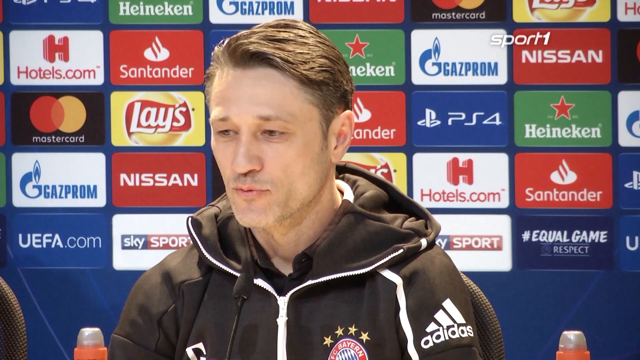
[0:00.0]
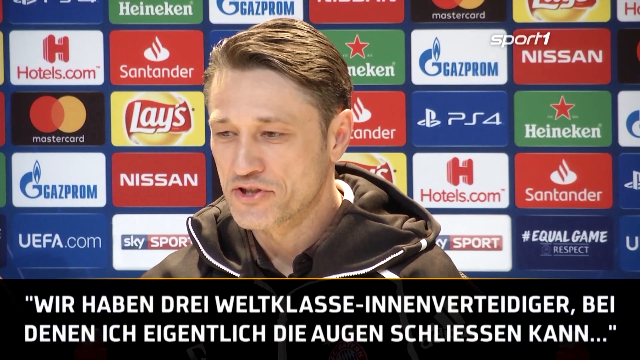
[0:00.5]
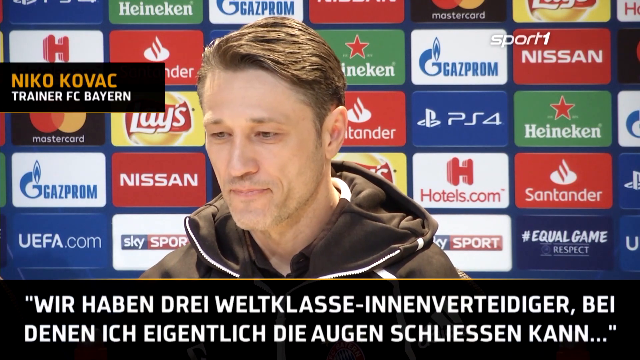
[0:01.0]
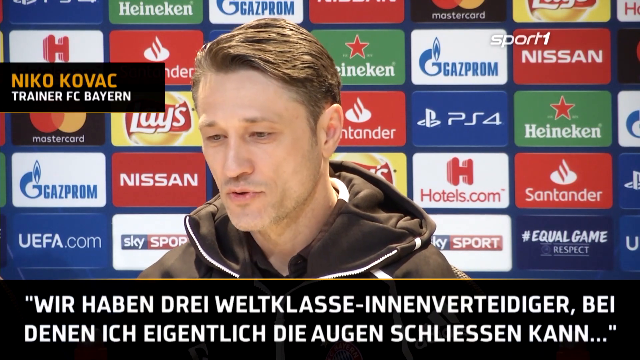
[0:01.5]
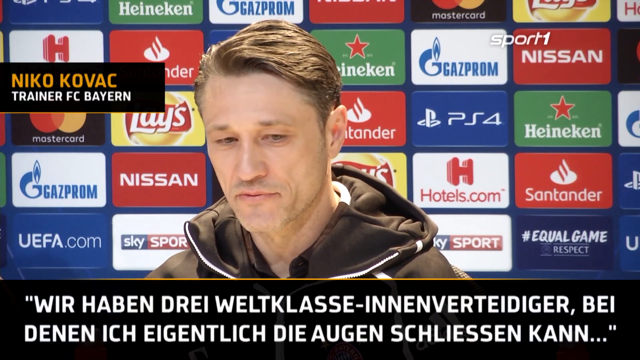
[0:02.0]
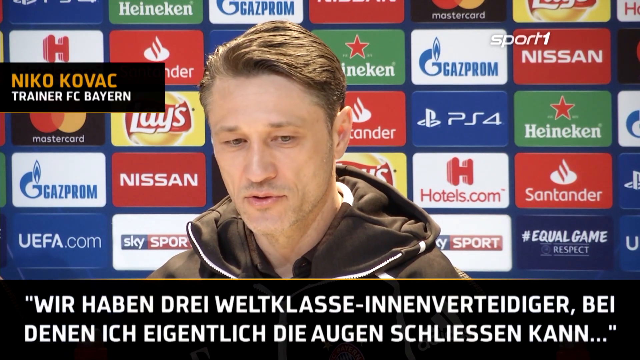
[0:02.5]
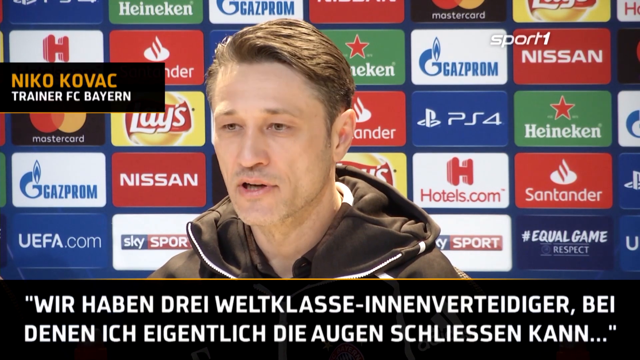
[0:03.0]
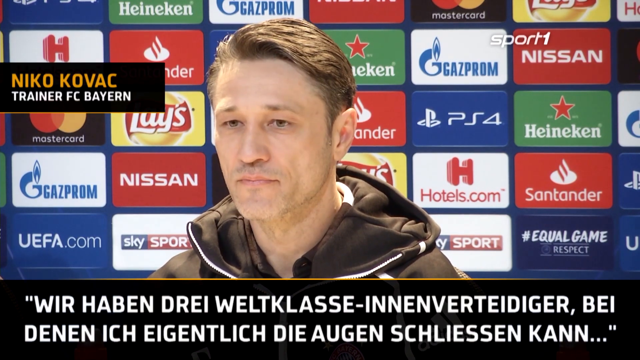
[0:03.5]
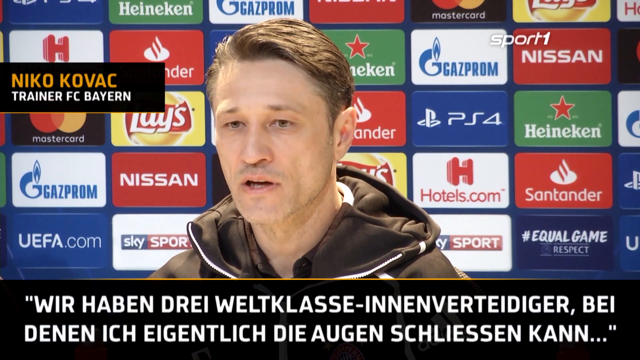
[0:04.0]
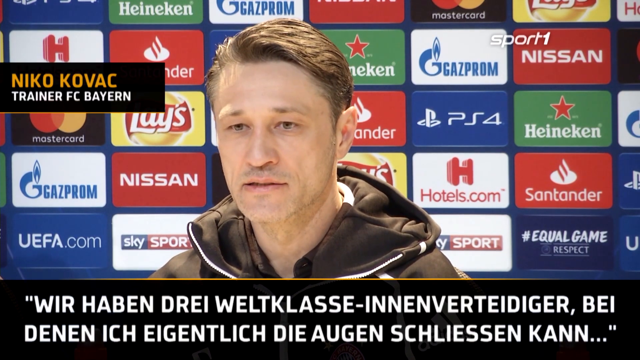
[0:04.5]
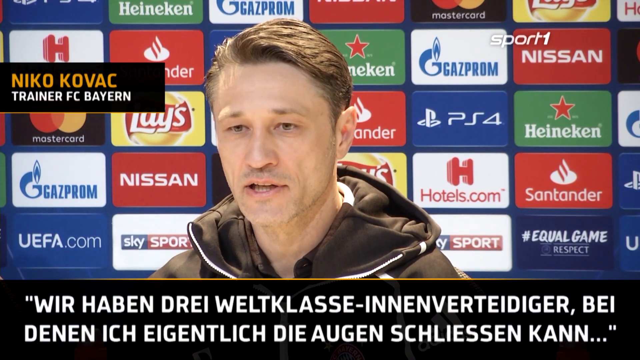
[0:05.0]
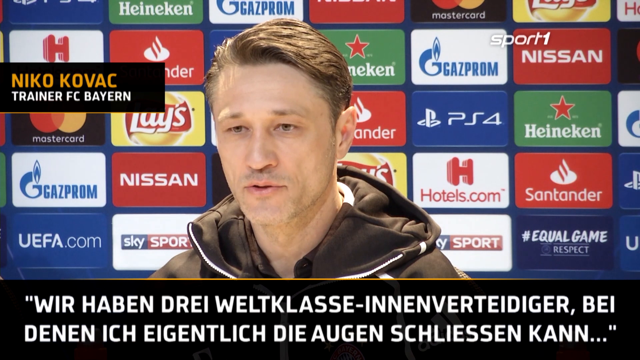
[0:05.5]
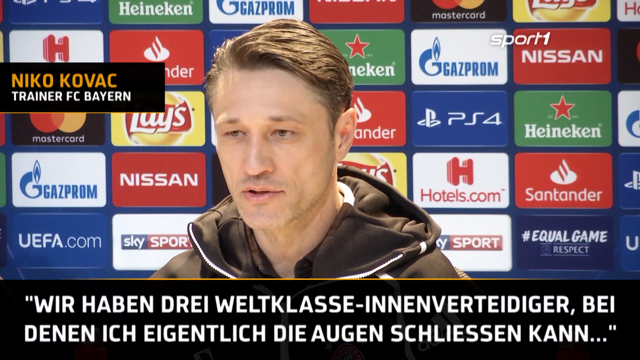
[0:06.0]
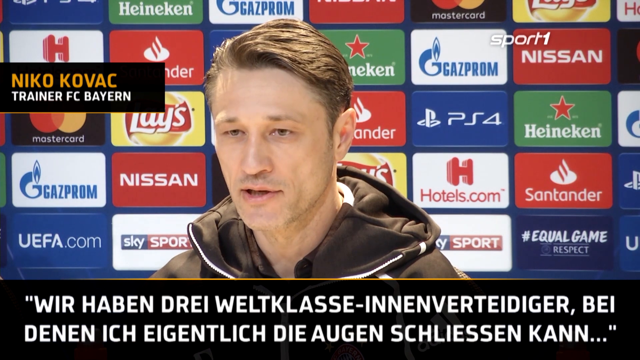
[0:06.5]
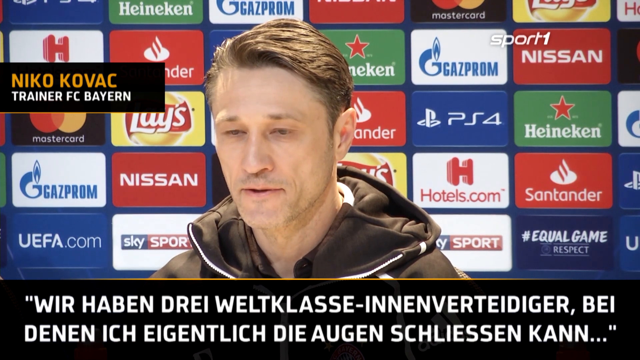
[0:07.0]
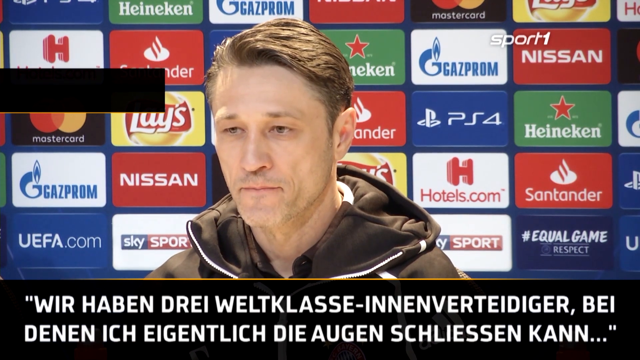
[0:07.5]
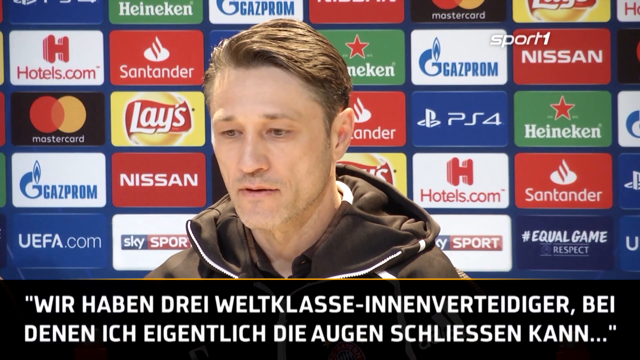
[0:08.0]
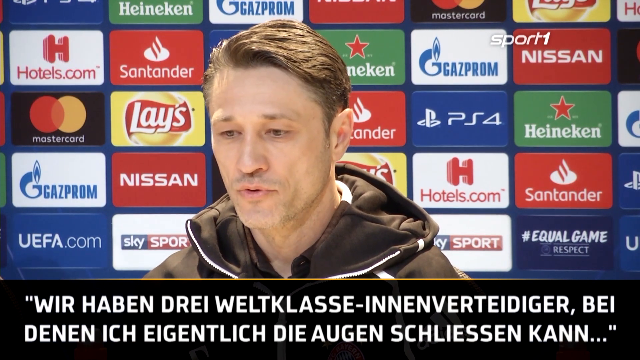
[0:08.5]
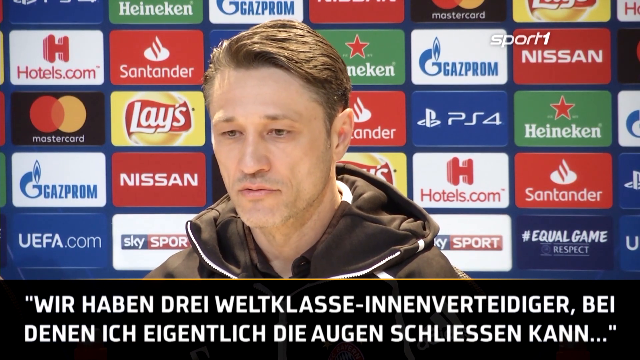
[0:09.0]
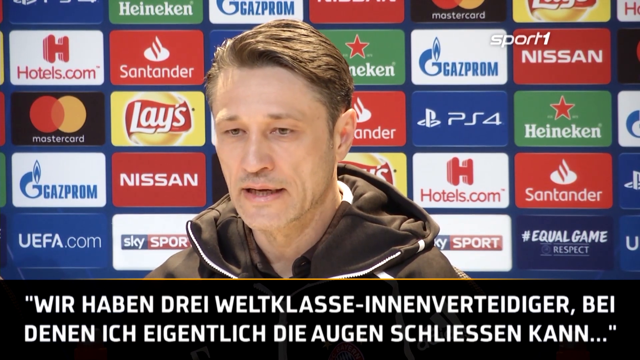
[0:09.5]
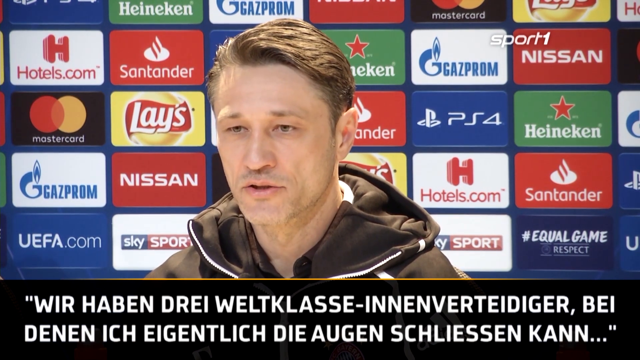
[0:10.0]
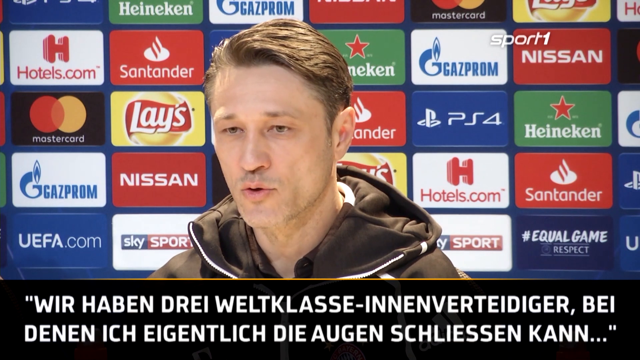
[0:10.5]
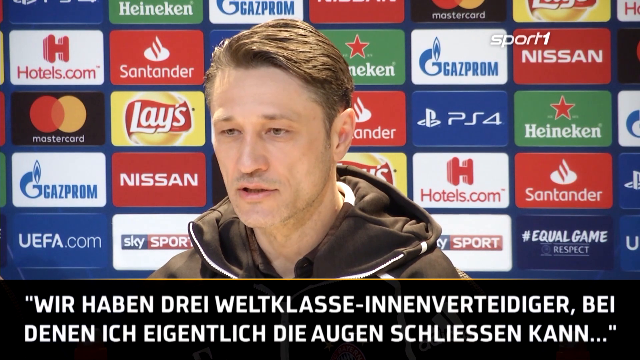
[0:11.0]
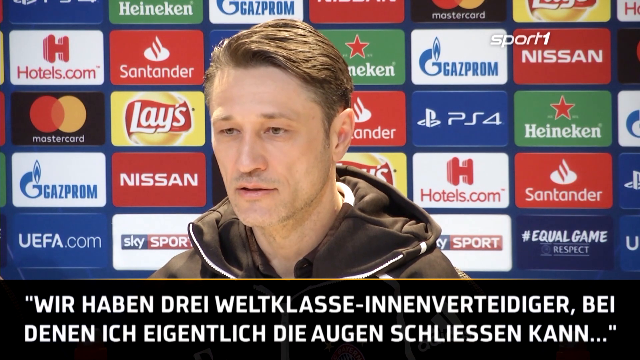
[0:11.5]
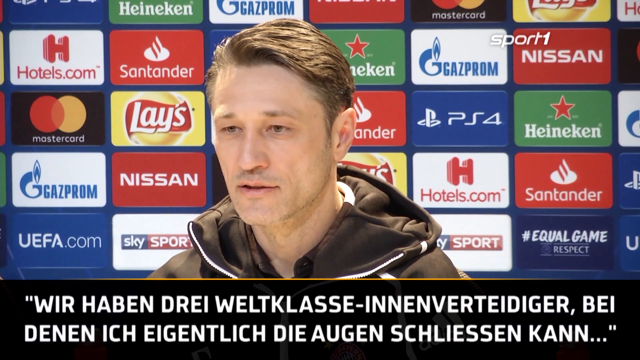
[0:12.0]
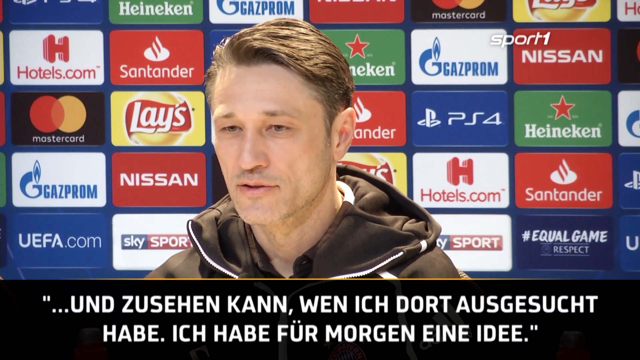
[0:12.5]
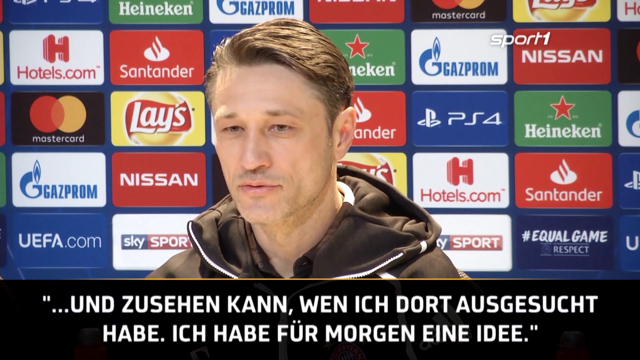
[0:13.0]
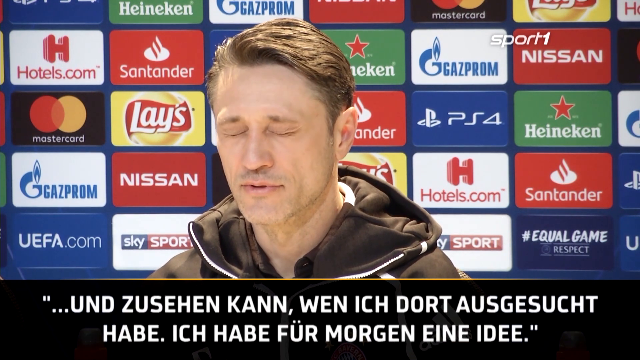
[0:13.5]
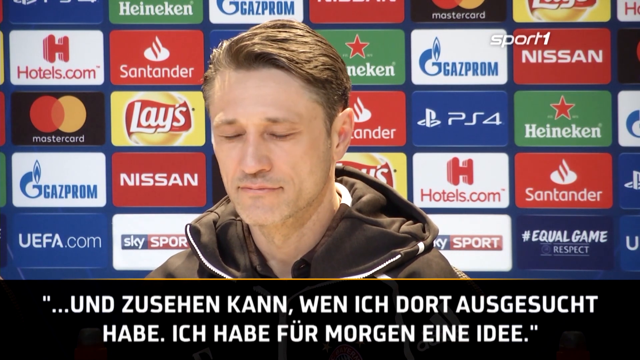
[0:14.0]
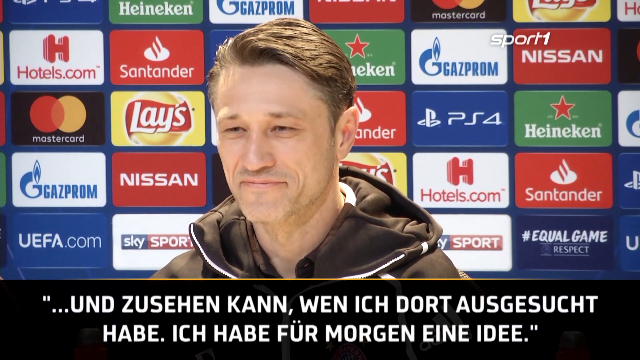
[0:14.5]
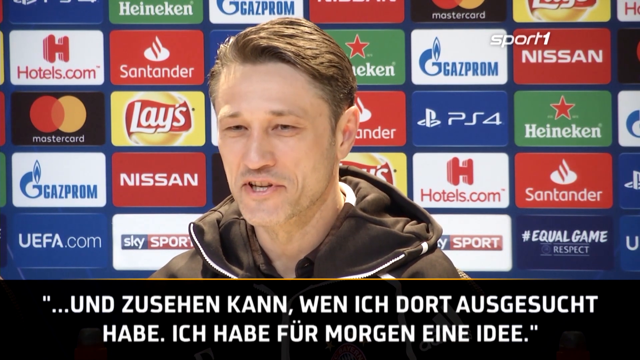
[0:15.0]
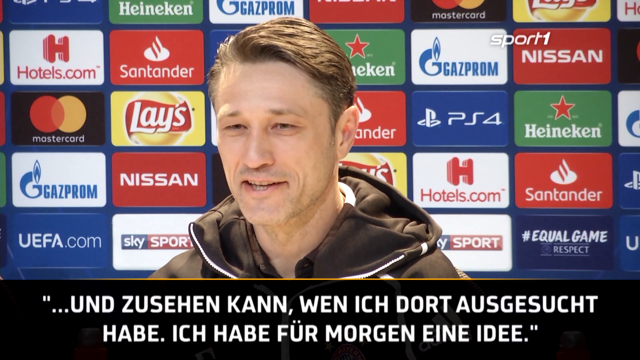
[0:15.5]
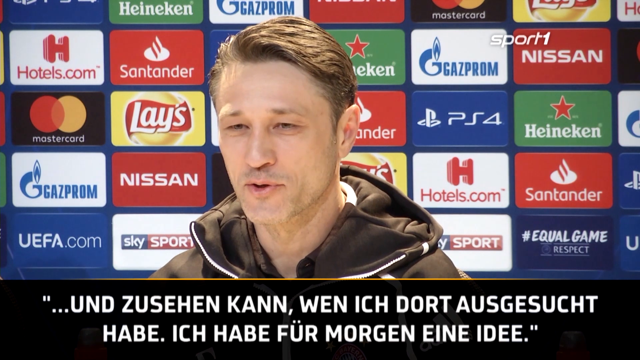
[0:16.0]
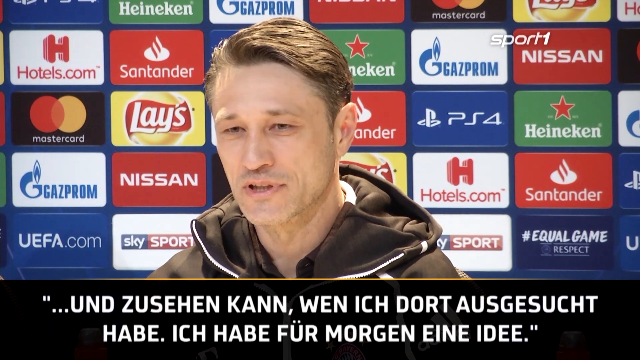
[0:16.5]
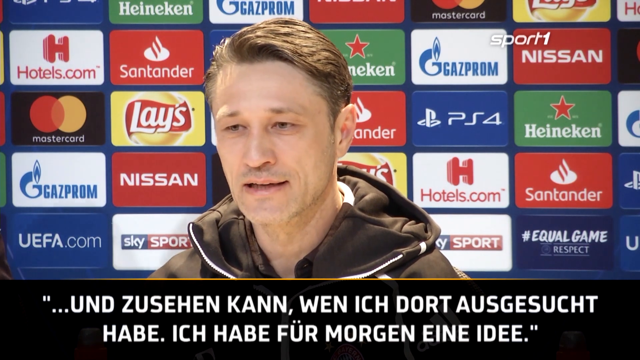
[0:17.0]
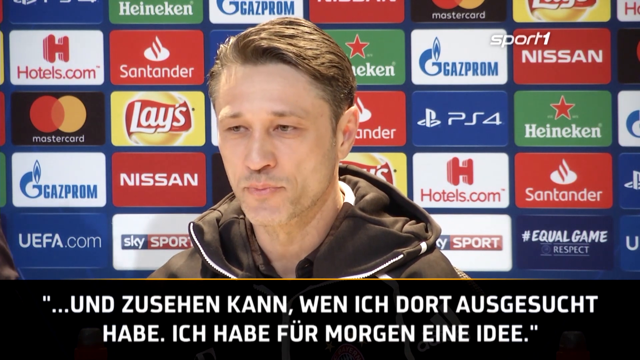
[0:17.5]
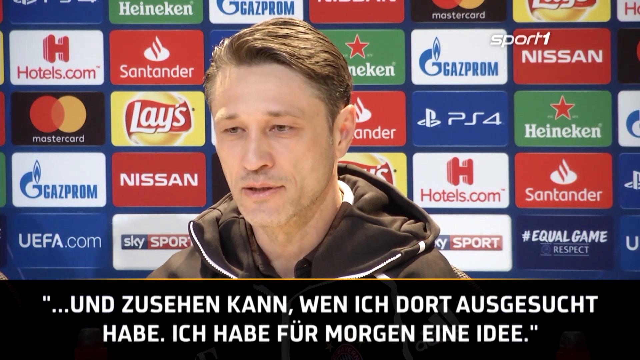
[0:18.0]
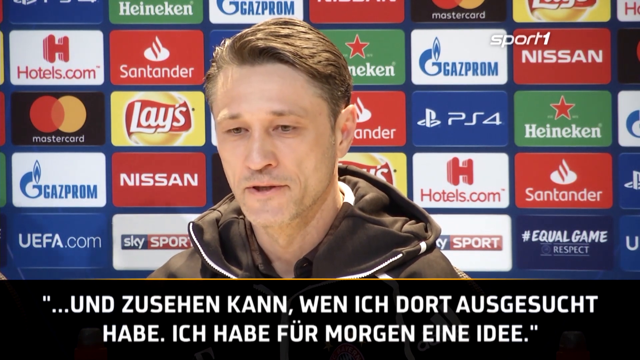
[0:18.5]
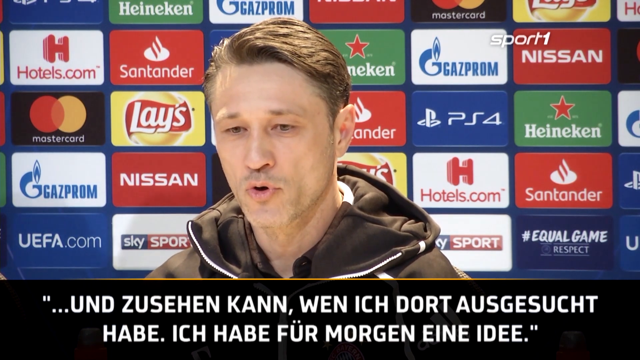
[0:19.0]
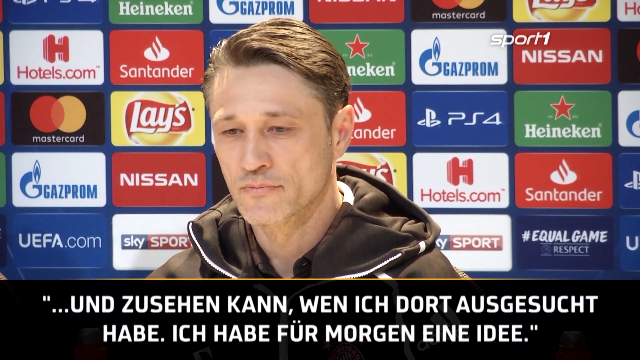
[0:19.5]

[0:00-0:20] A man with darker brown hair in a black jacket with white stripes is in the middle of the screen, in front of a poster background with several advertisements, including Nissan, Heineken, Ps4, Hotels.com, Santander and Weifa.com, and a Gazprom advertisement in the back. On the left is the text "Niko Kovac, Trainer FC Bayern", and at the top right it says "Sport 1". German text at the bottom begins "Wir haben drei". The man has a large nose and a Caucasian appearance. He talks toward the screen while looking down, then looks up as his mouth moves, and he looks slightly to his right during the interview. He breathes in deeply and the top left logo disappears. He breathes in and talks again, closes his eyes, shakes his head, and then speaks frankly. A shadow from a person moving appears on the left side of the screen.